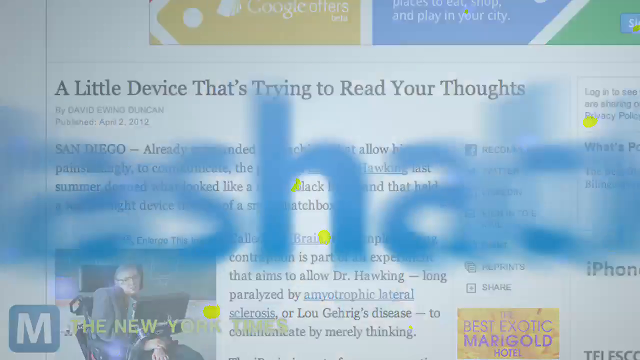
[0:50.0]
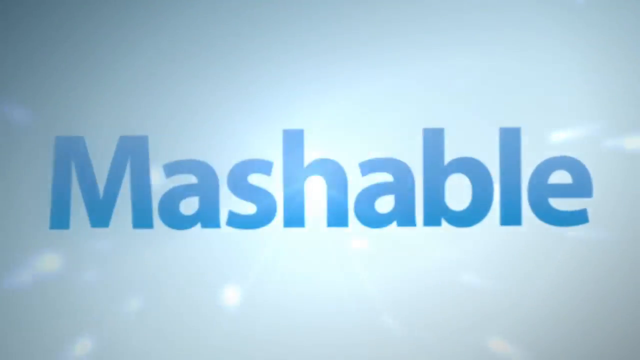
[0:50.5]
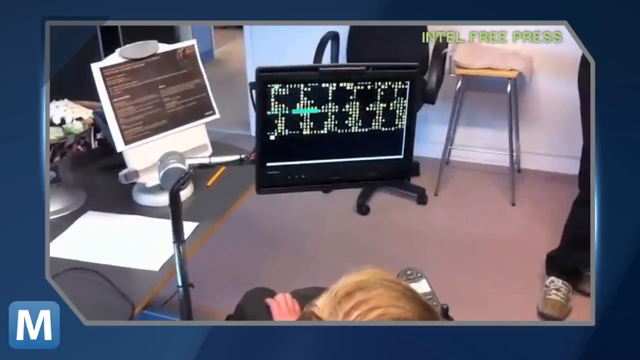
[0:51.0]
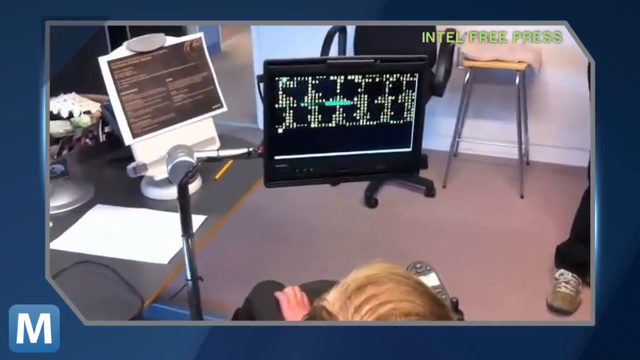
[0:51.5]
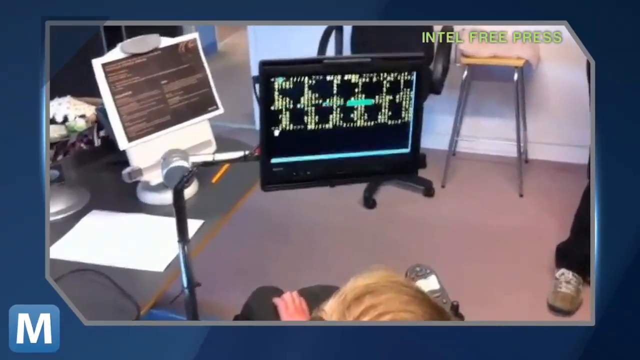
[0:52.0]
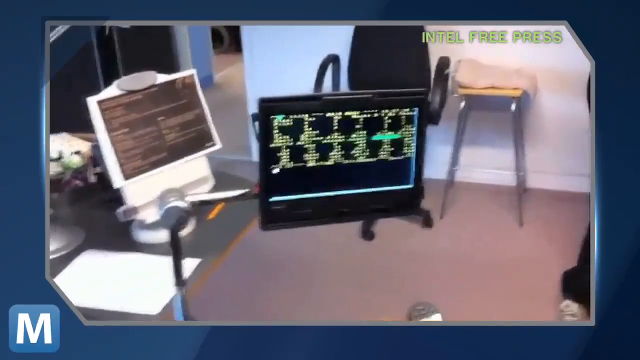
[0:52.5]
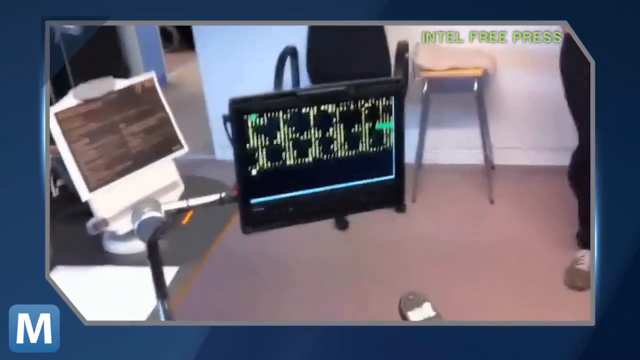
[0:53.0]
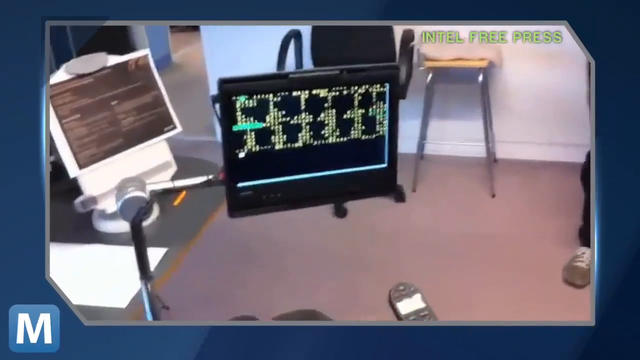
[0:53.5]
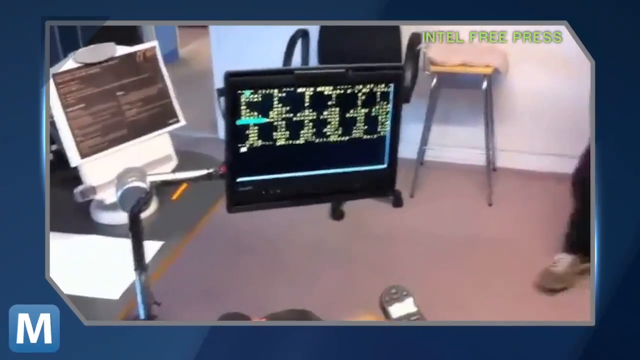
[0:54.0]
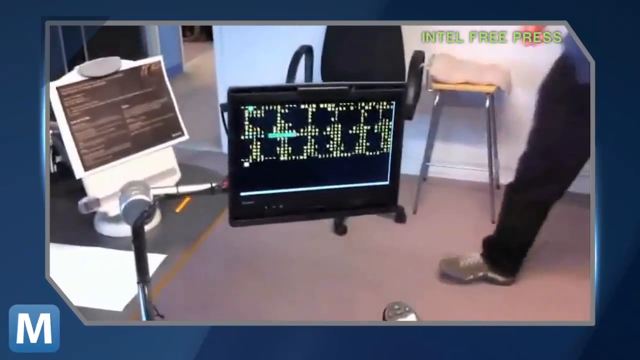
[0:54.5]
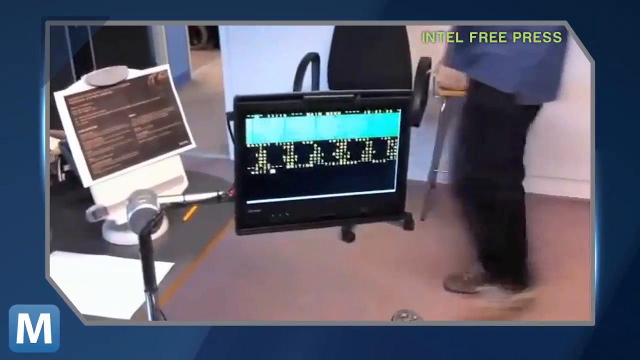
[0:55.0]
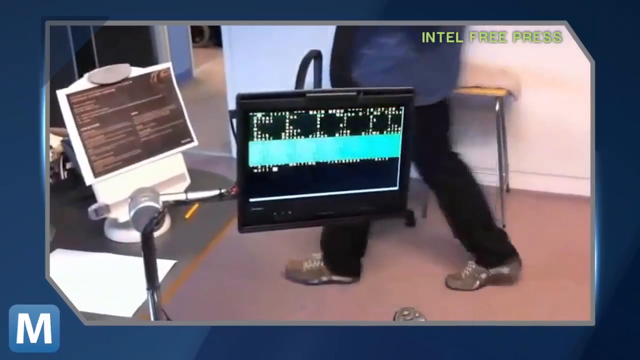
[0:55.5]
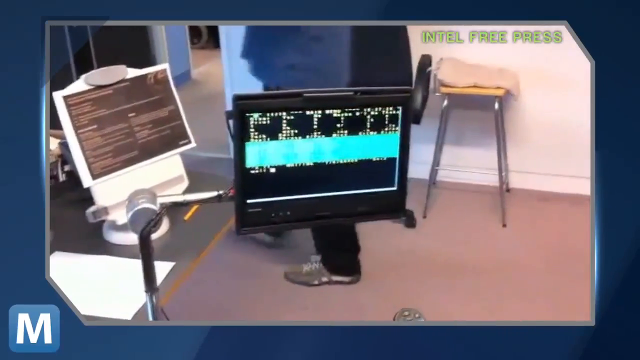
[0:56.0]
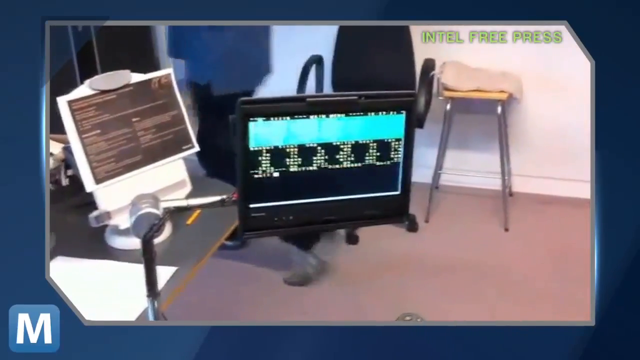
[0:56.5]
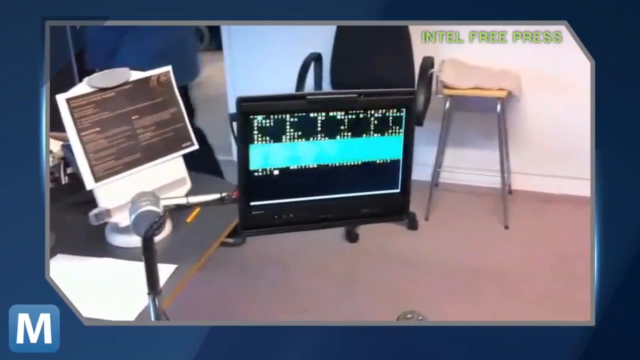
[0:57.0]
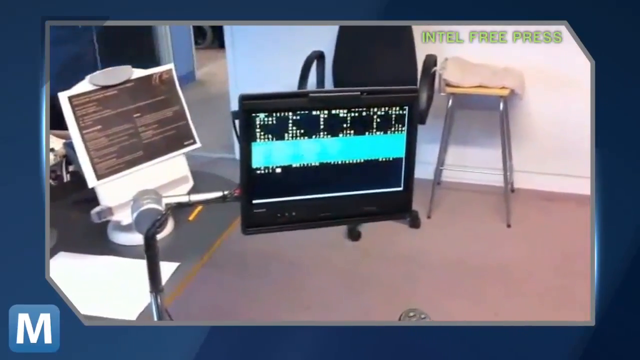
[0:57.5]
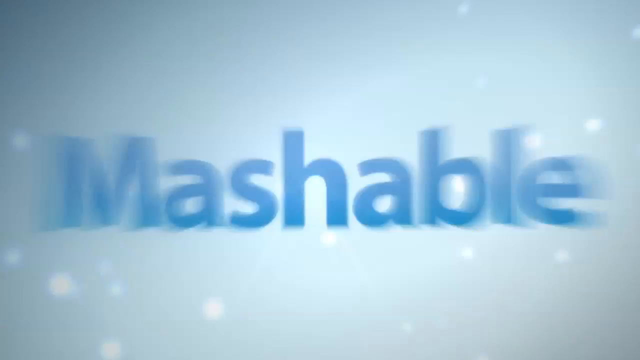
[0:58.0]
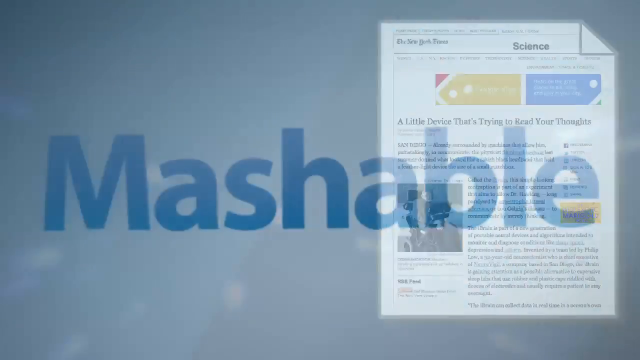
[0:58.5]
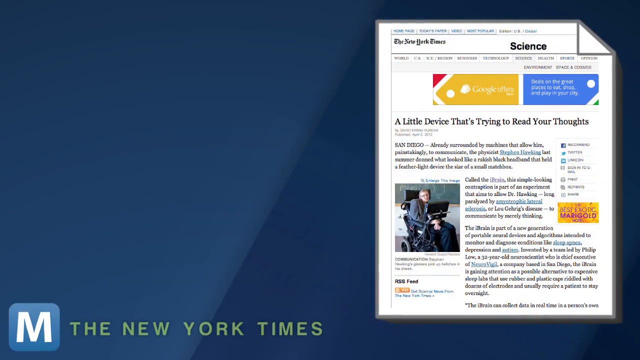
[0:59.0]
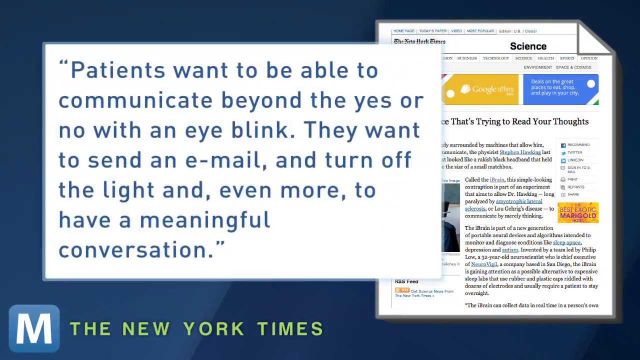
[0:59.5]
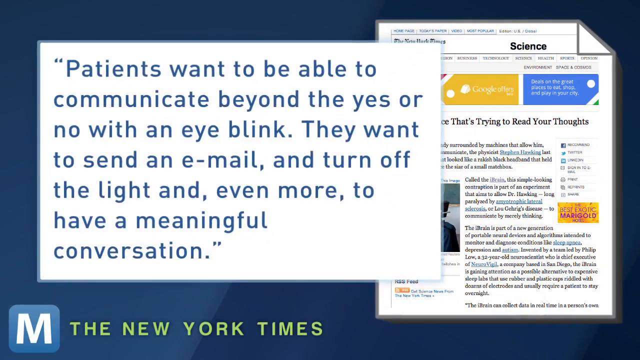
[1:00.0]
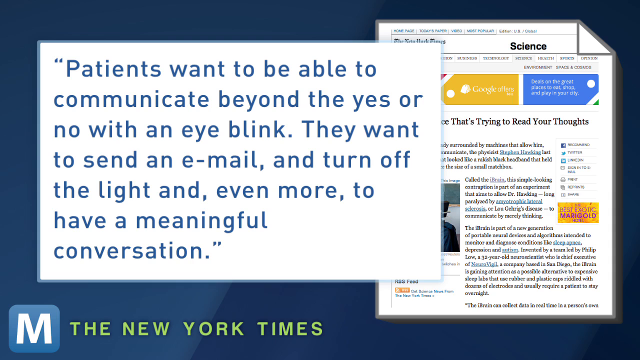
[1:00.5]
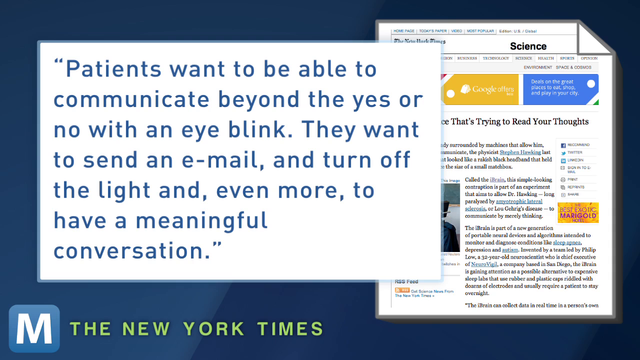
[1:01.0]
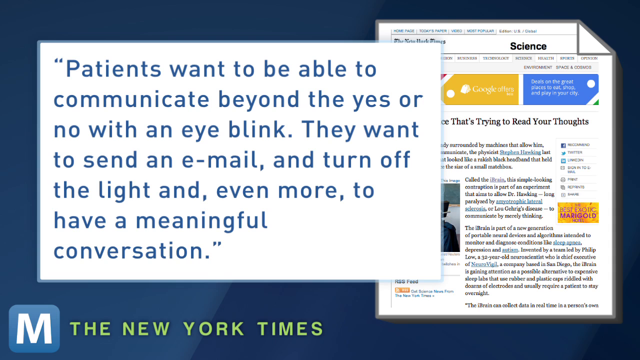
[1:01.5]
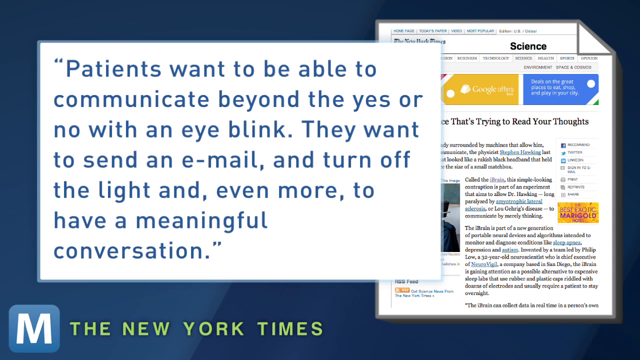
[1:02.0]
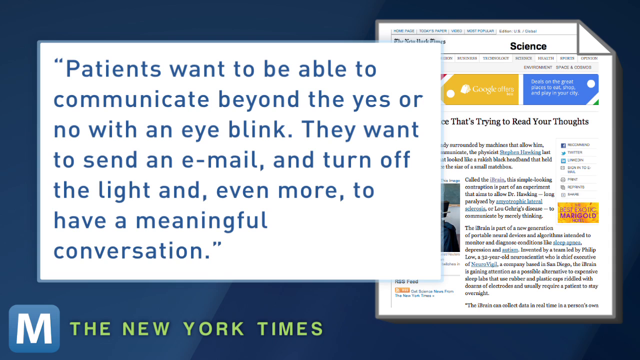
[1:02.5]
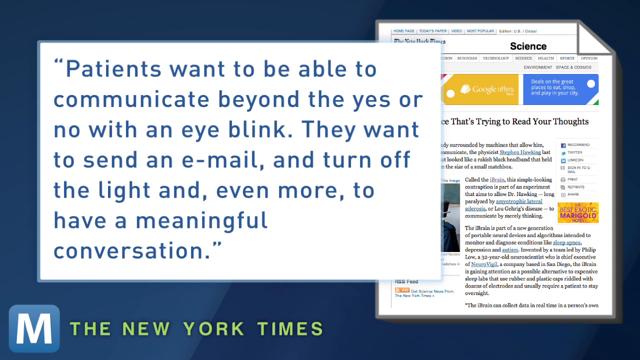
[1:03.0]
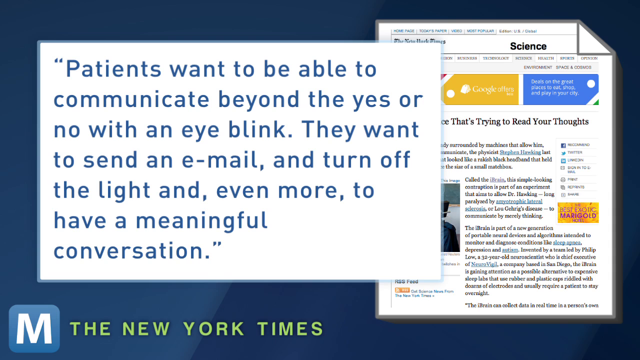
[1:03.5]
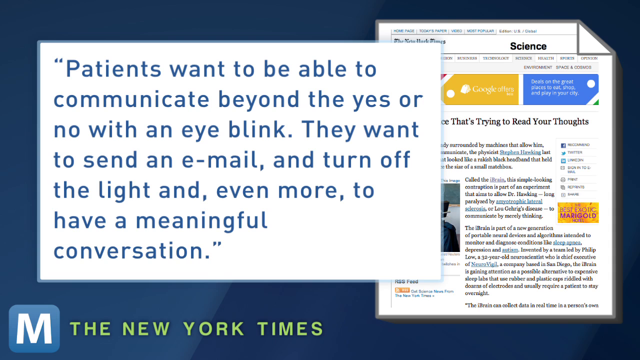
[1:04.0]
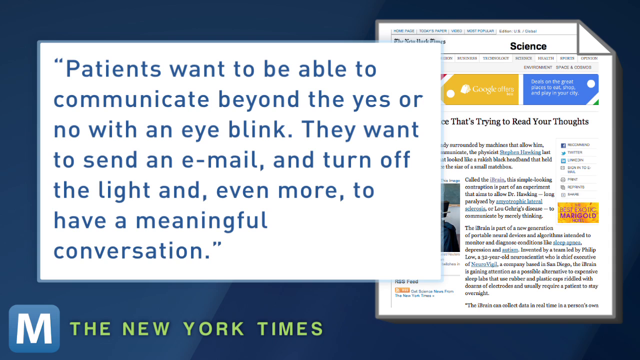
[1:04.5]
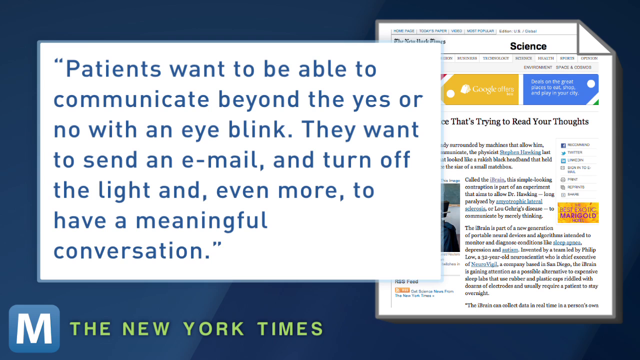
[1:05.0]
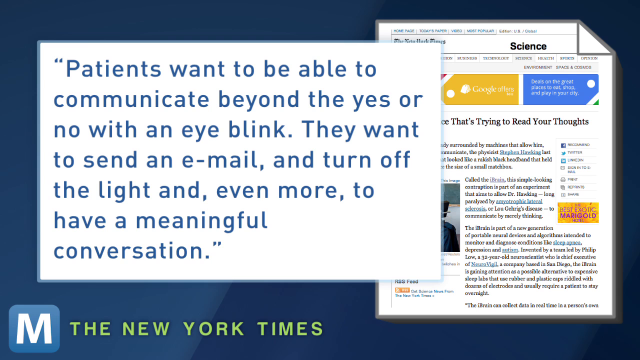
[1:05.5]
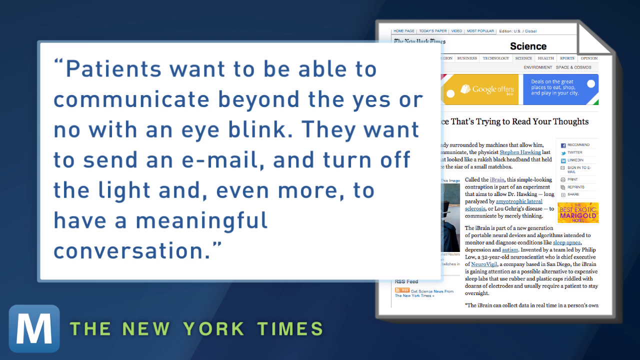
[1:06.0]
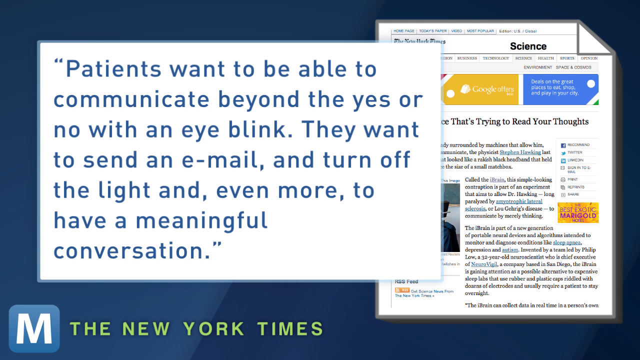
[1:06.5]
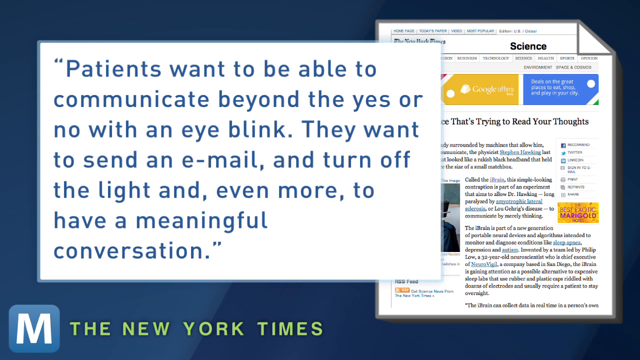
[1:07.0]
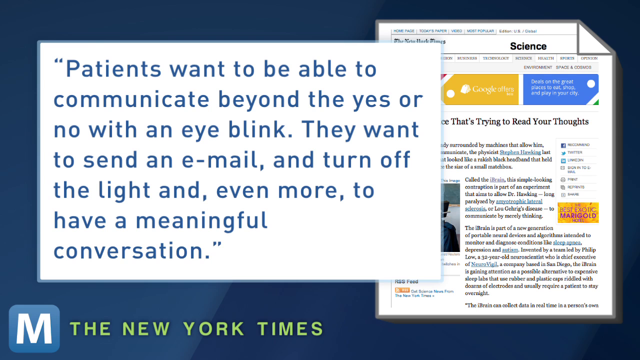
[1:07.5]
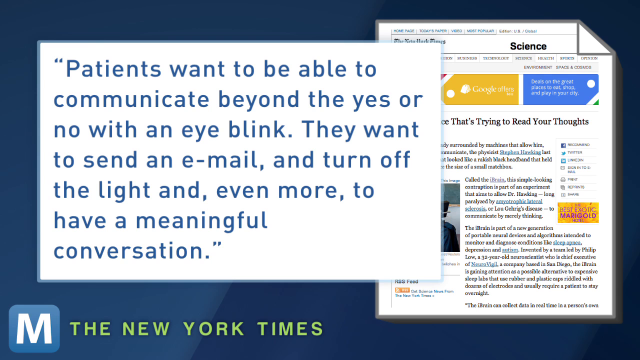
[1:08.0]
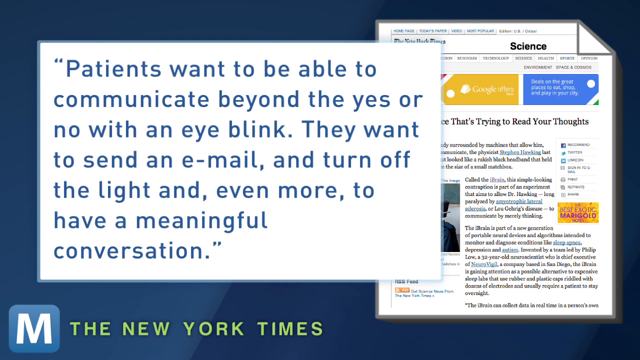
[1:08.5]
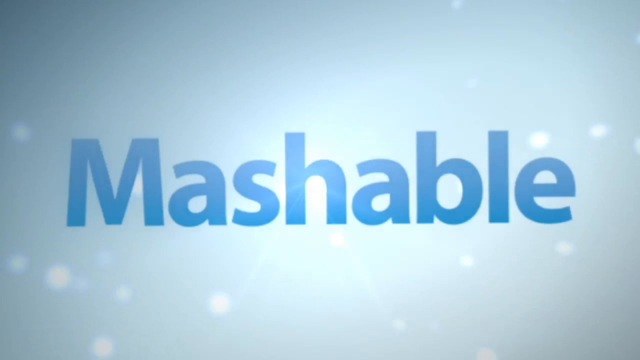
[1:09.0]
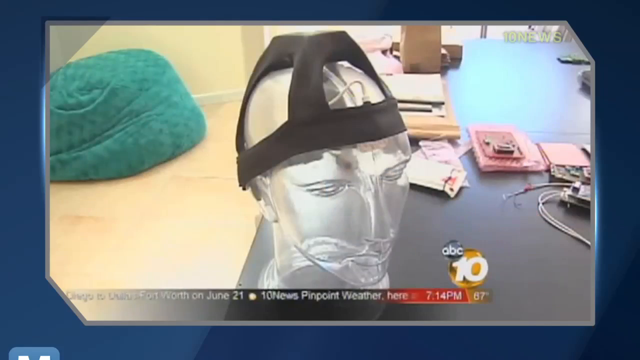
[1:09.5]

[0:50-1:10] The news article transitions to the Mashable transition screen again: a light blue background with the darker blue word "mashable" flashing into the center of the screen. The video then cuts to new footage labeled "Intel Free Press" in the upper right-hand corner. It is filmed over the head of someone sitting in front of a screen that may be attached to a wheelchair. The screen flashes information that cannot be read. A bright blue box appears on the screen and jumps up and down, as if something were being selected. Another Mashable transition follows, with a bright blue background and the word "mashable" flying into the middle of the screen. Next comes an image of the same newspaper article seen before, now cropped and placed into newspaper clipart on the right-hand side of the screen over a blue background. A quote from the article then appears overlaid on the left-hand side of the screen in a white box, written in blue text: "Patients want to be able to communicate beyond the yes or no with an eye blink. They want to send an email and turn off the light and, even more, to have a meaningful conversation." The quote stays on screen for almost 10 seconds before the Mashable transition screen appears again. After it, a fake head is shown wearing the black strappy headband that was advertised in the news article.